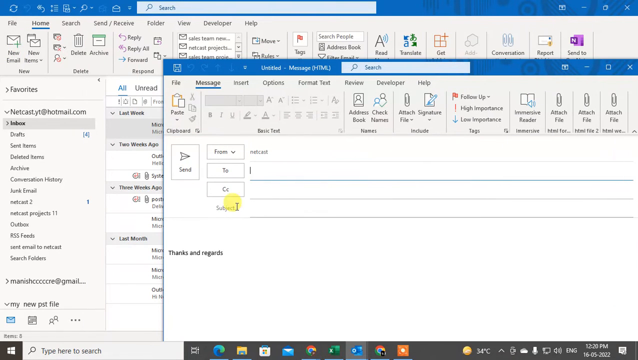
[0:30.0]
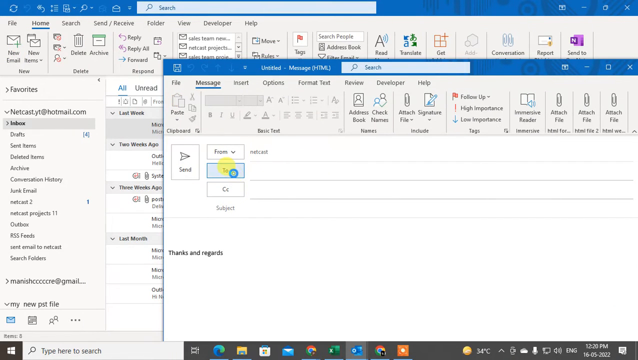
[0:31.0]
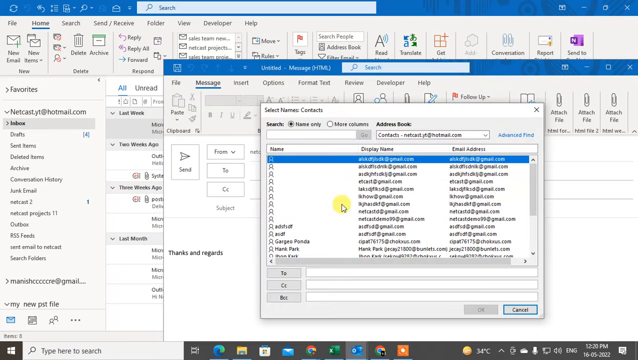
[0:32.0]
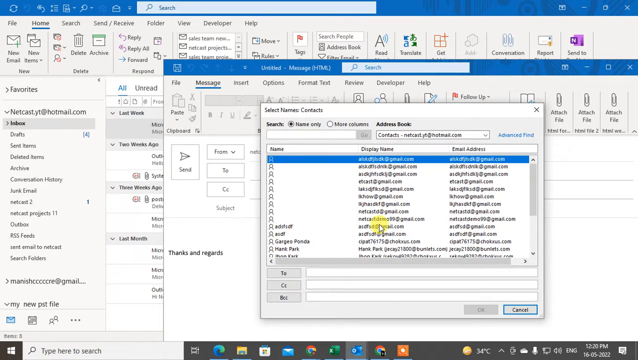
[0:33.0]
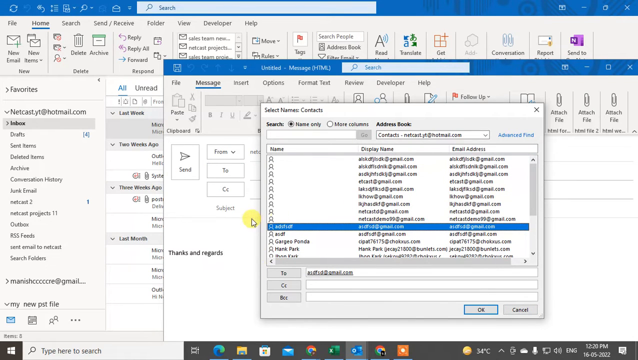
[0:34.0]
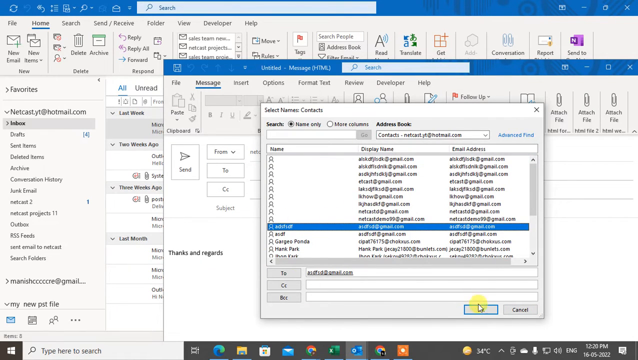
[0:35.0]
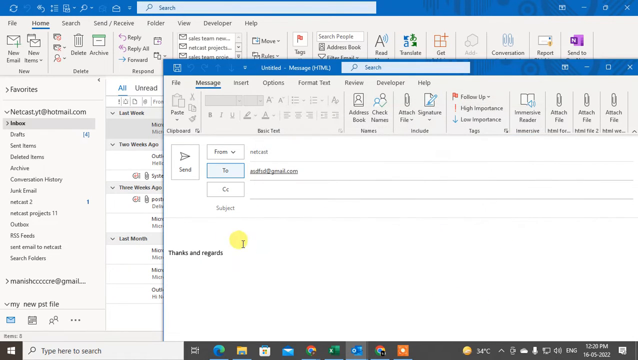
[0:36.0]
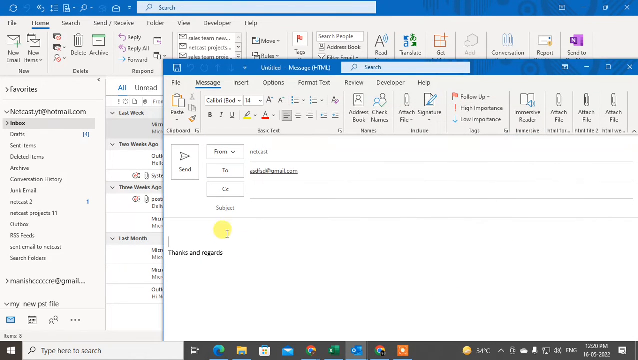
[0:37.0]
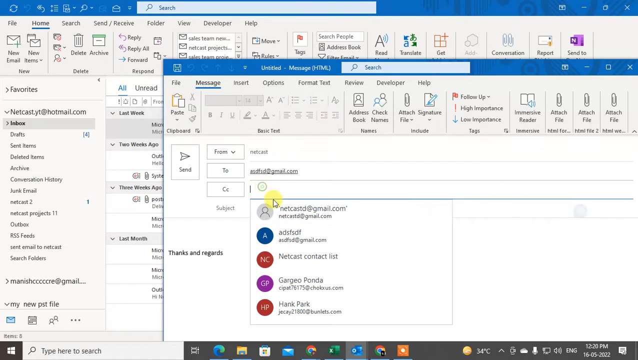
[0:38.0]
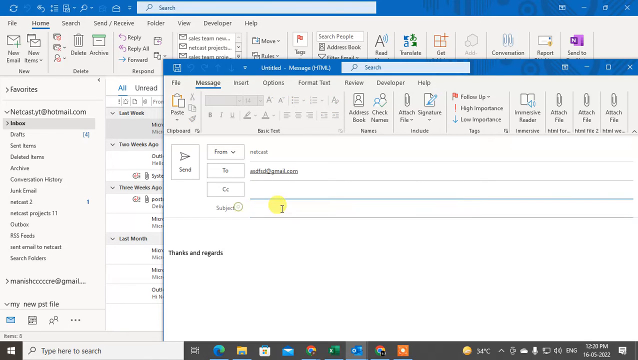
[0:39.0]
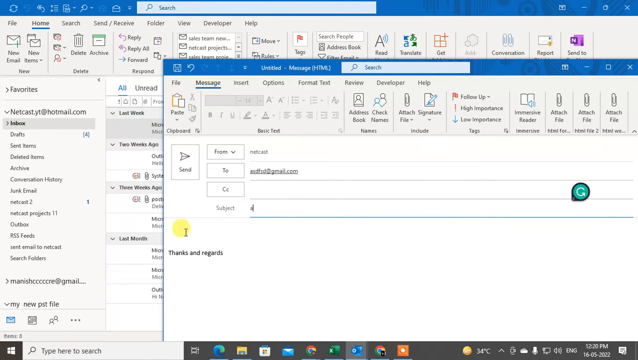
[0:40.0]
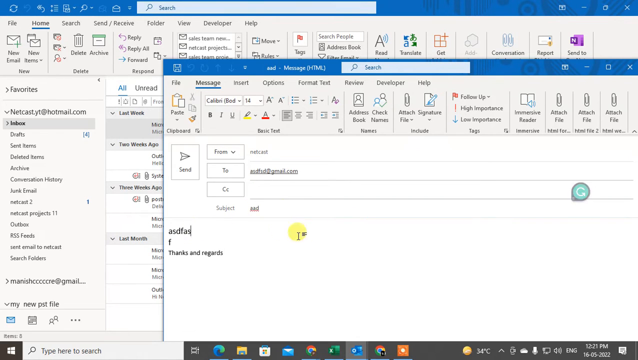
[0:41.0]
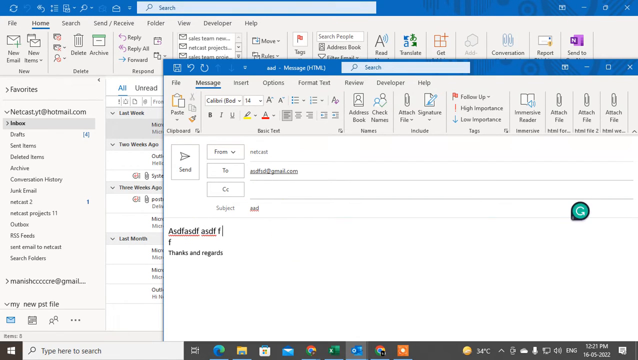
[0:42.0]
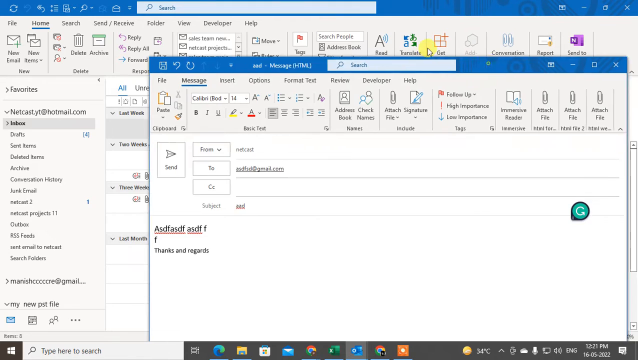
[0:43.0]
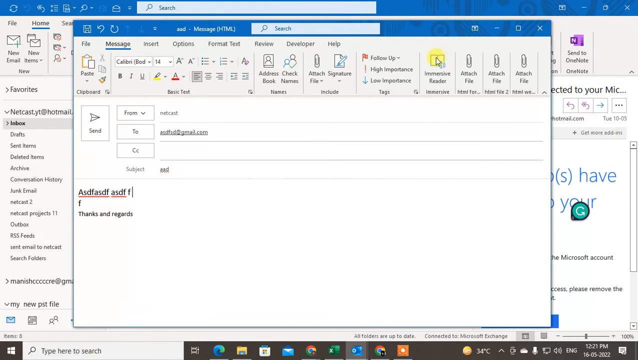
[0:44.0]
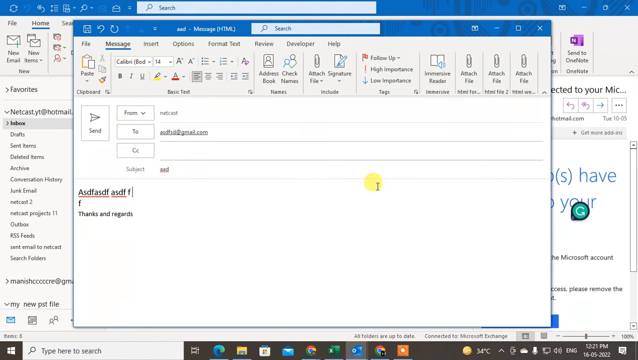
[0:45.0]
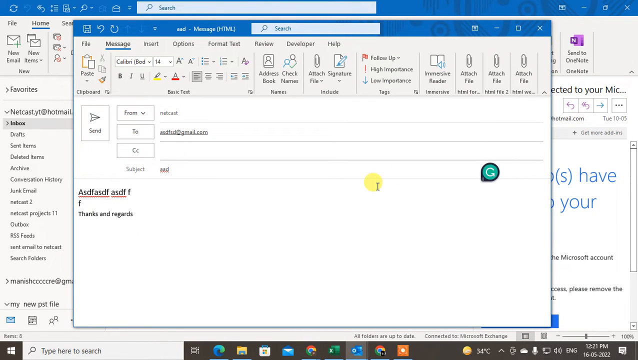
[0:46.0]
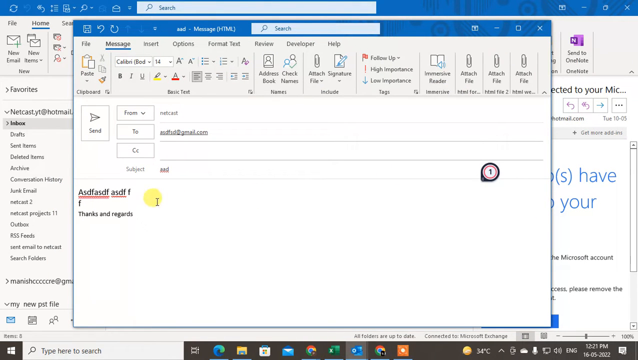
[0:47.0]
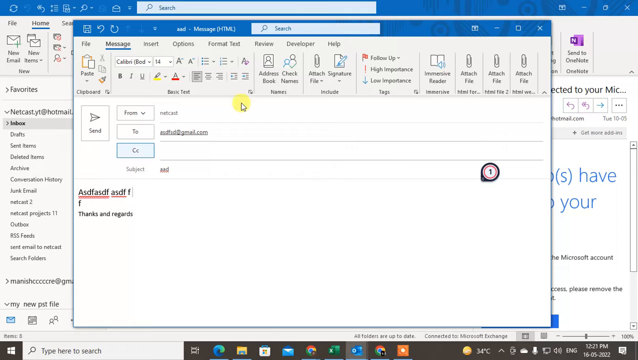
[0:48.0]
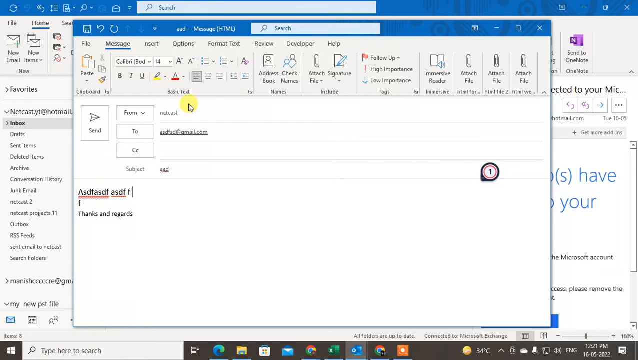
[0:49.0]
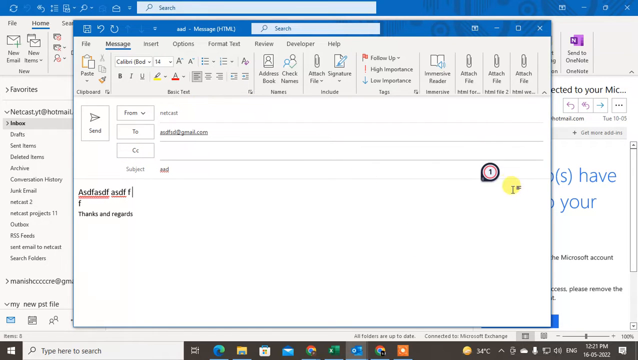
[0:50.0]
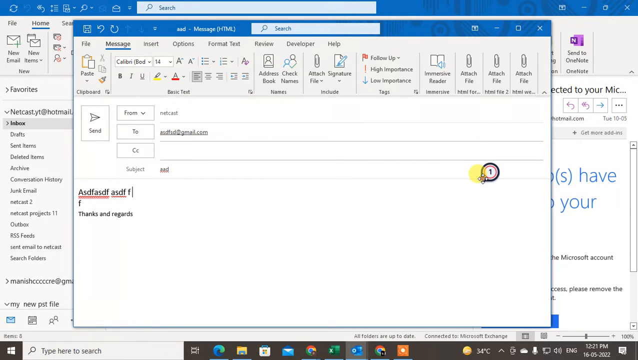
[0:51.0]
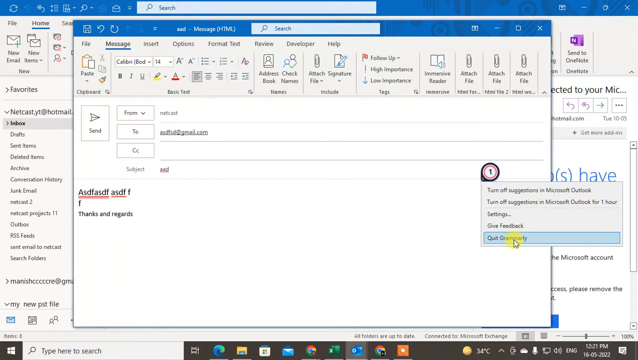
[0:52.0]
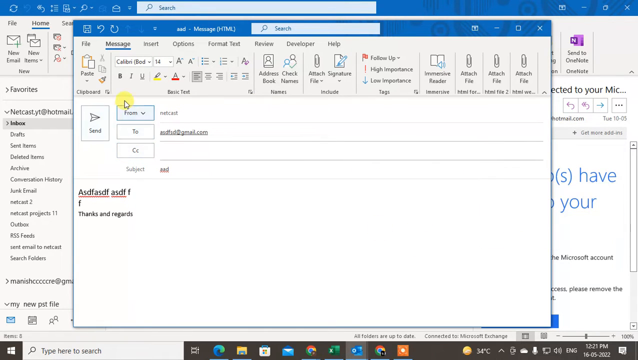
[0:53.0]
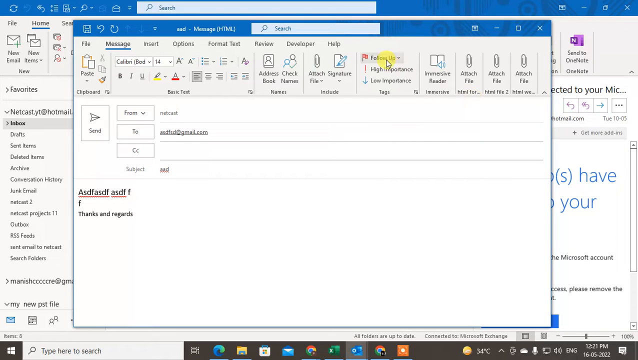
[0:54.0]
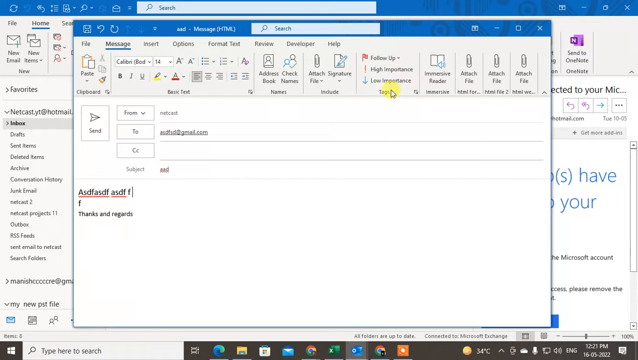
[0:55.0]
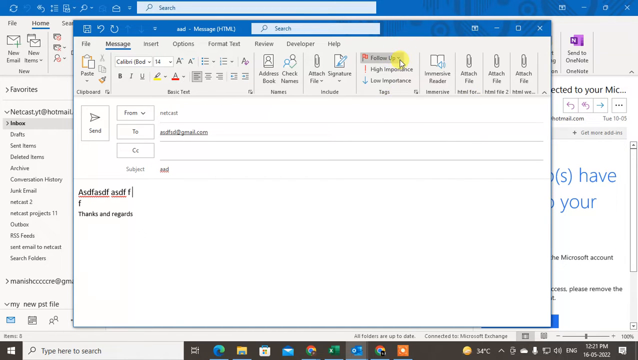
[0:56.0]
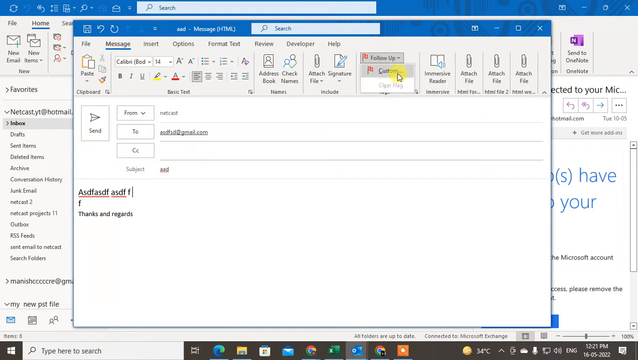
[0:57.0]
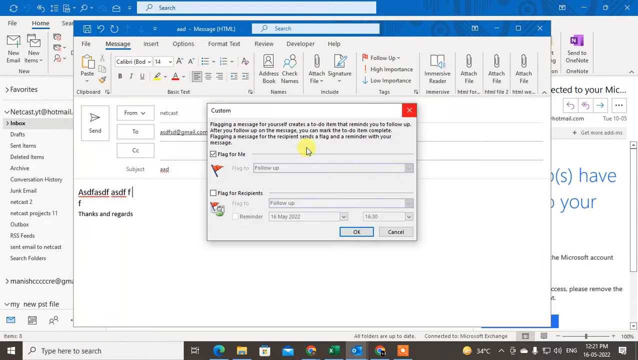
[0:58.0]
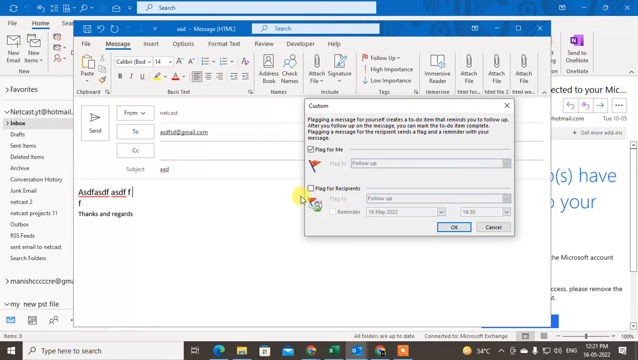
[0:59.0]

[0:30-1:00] A black screen appears before the same email program is brought up. A new message is opened, with "Untitled Message HTML" at the top. A third window titled "Select Names" then comes up, searching by contacts. It lists several email accounts, some with demo names on the left-hand side like "ASDF" and a few with semi-real names and real or demonstration email addresses, sorted into the categories "Name", "Display Name" and "Email Address". The mouse cursor is highlighted with a yellow circle effect so its position is always visible. The user scrolls through, clicks on a user named ASDFASDF, and clicks OK to start writing an email to them.